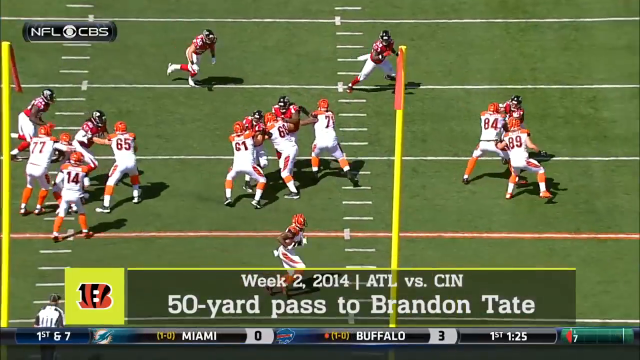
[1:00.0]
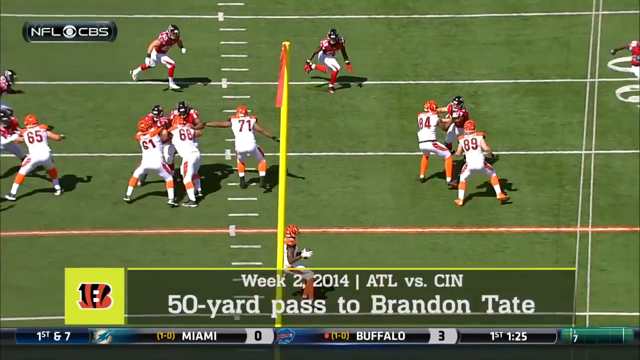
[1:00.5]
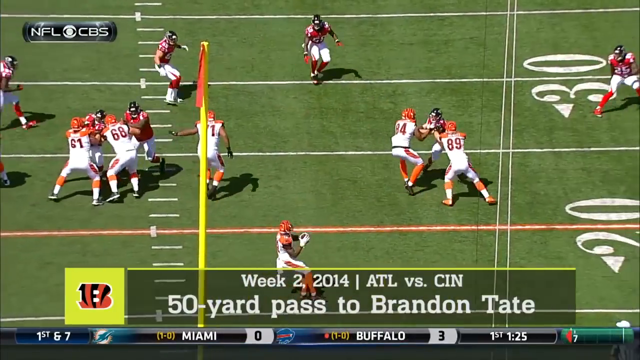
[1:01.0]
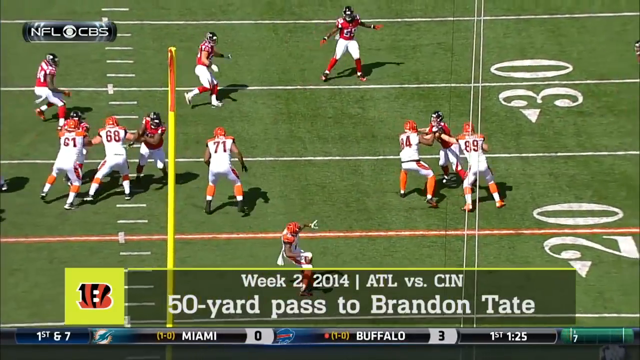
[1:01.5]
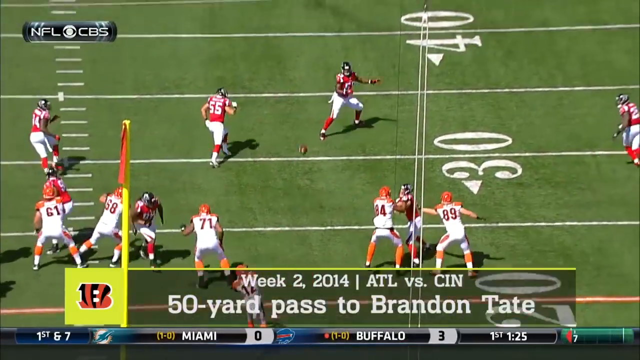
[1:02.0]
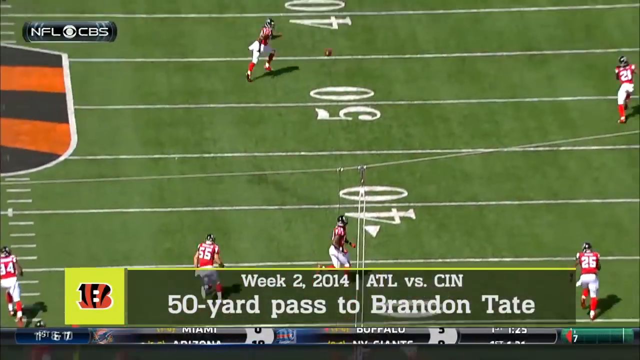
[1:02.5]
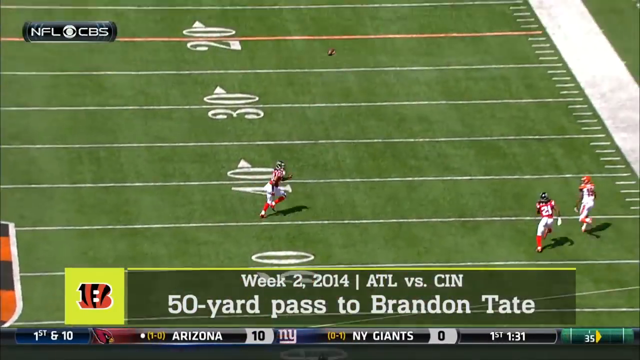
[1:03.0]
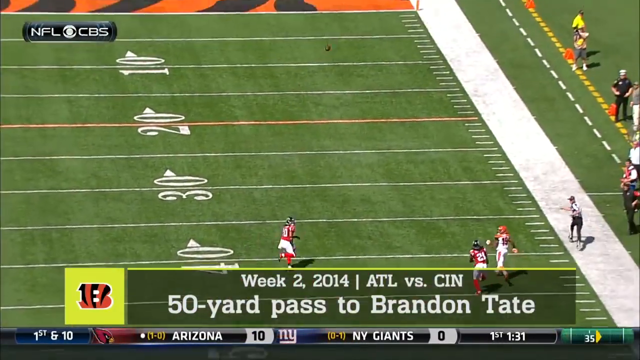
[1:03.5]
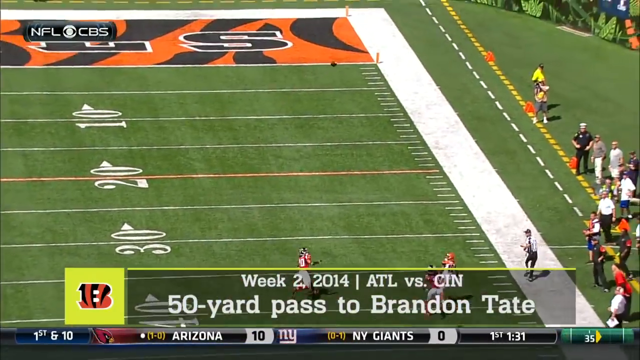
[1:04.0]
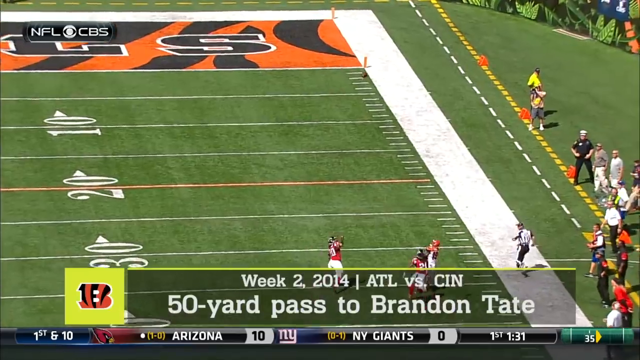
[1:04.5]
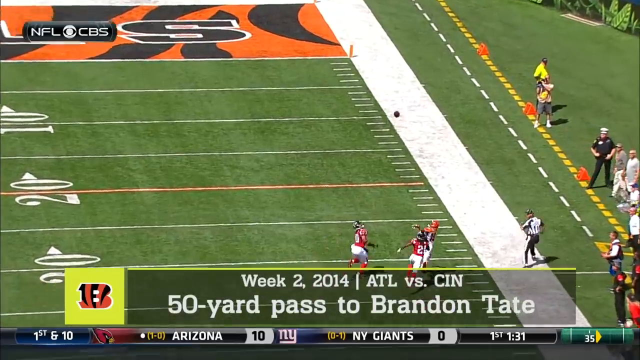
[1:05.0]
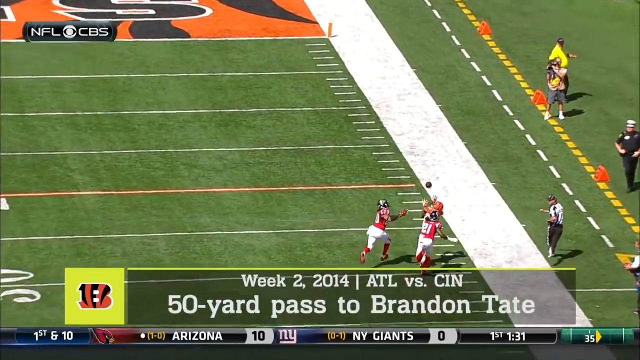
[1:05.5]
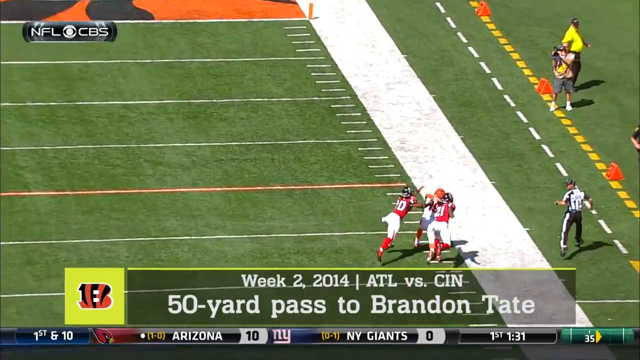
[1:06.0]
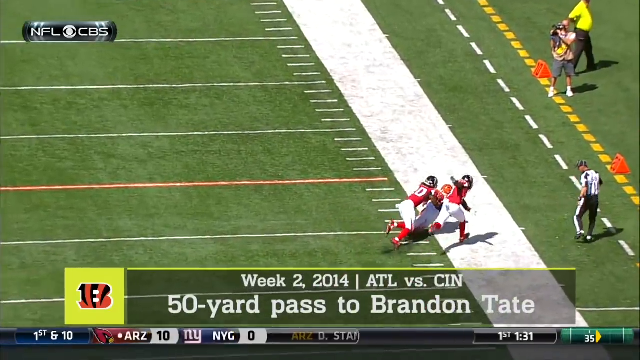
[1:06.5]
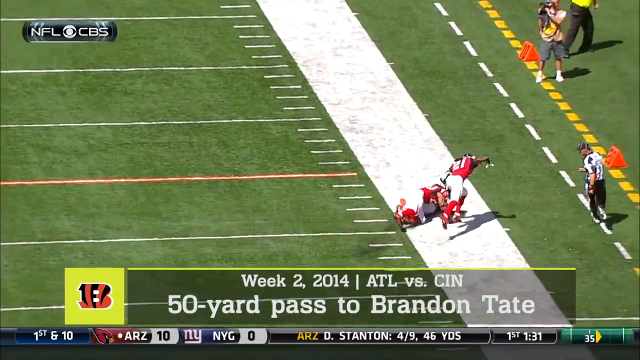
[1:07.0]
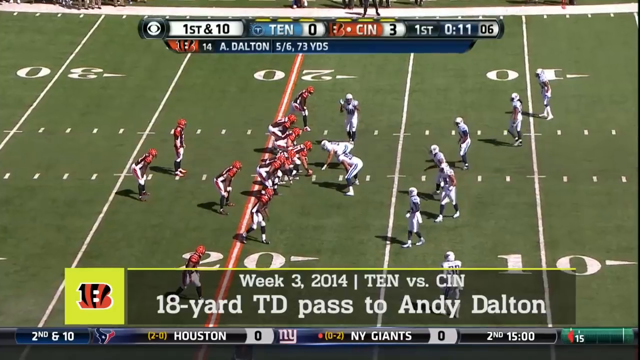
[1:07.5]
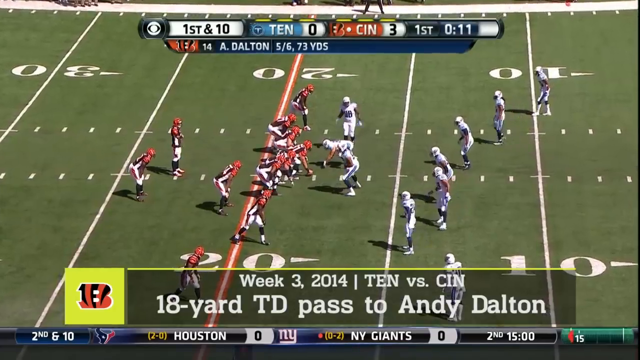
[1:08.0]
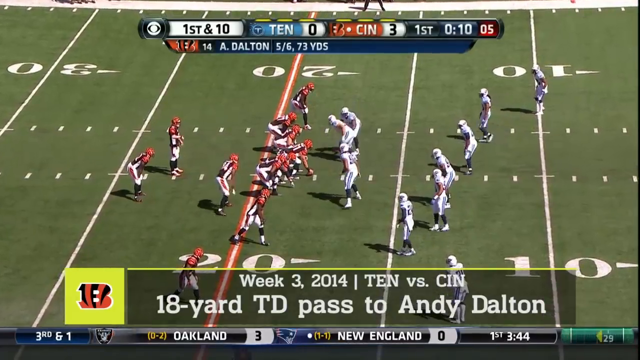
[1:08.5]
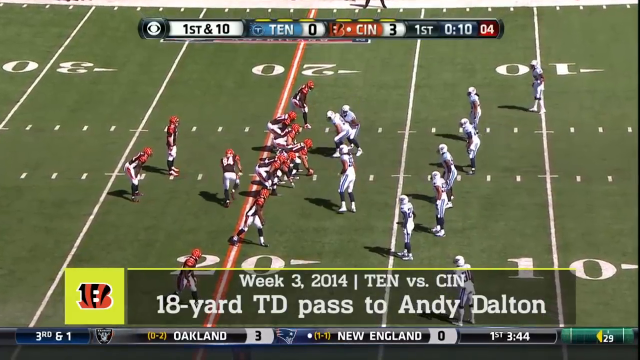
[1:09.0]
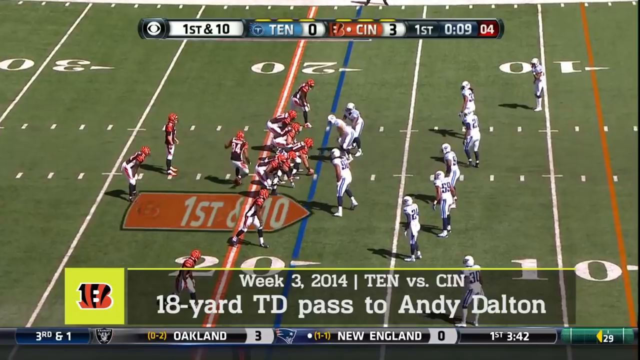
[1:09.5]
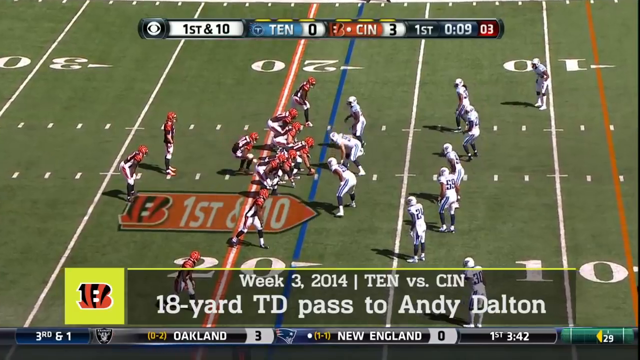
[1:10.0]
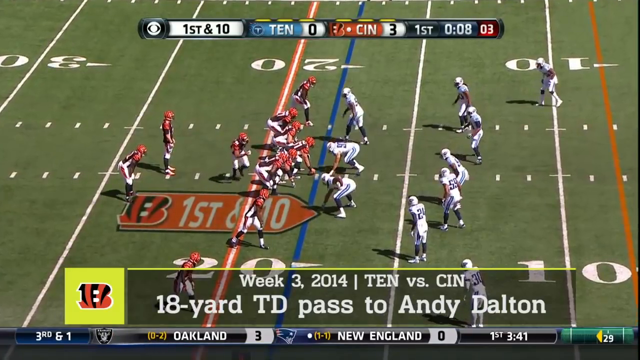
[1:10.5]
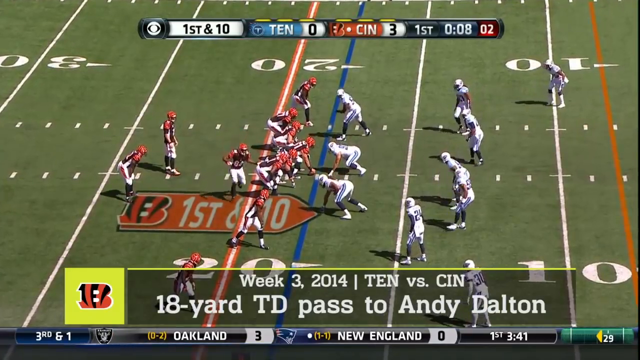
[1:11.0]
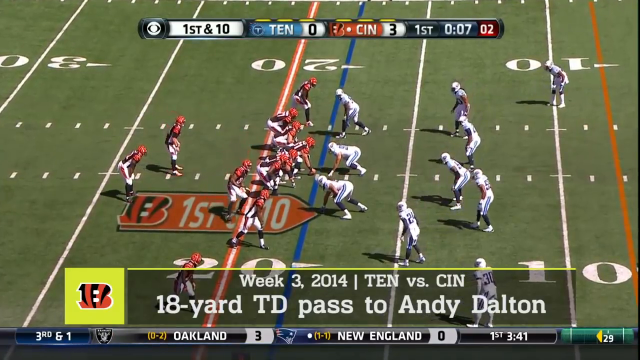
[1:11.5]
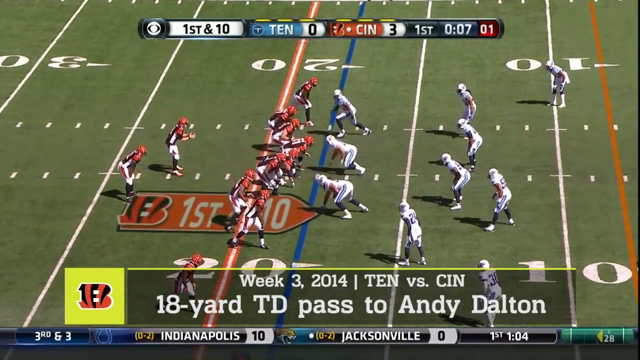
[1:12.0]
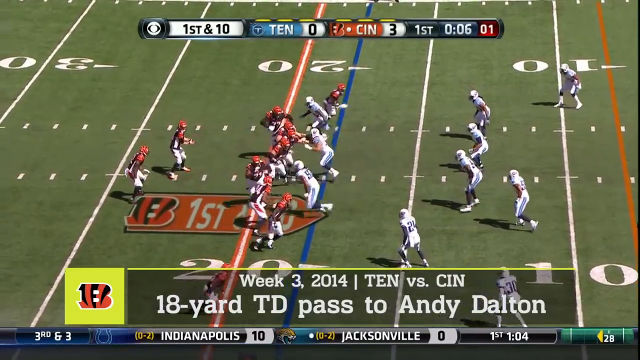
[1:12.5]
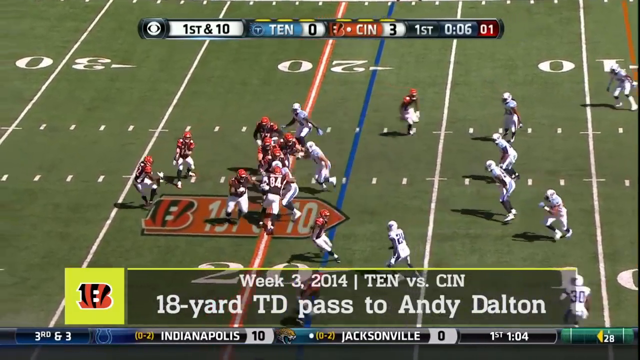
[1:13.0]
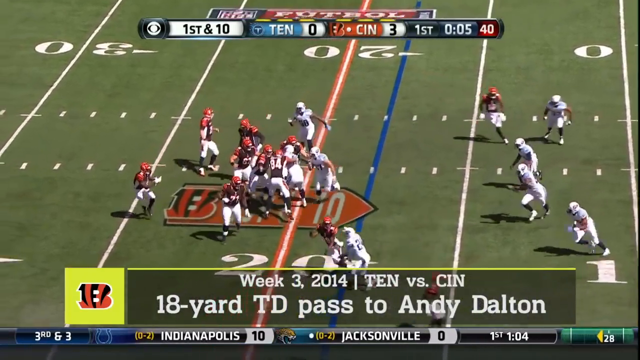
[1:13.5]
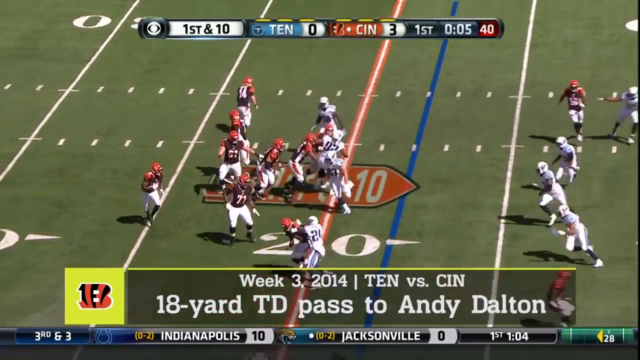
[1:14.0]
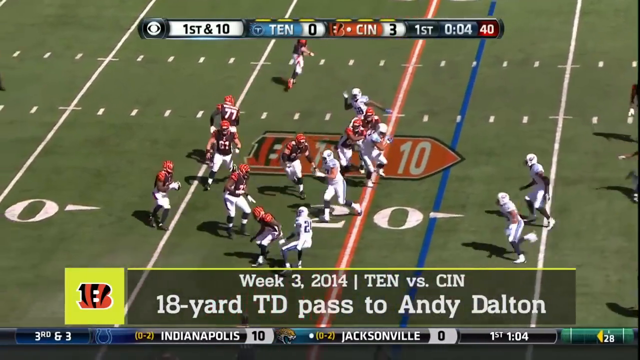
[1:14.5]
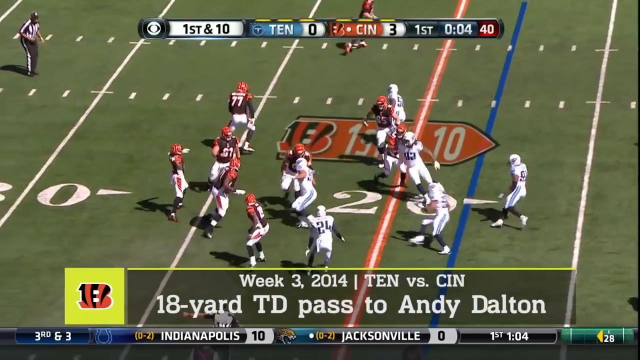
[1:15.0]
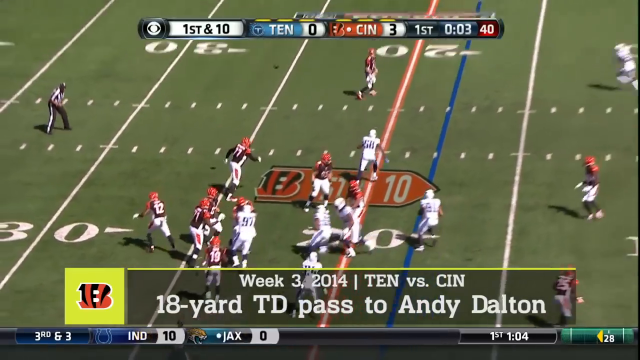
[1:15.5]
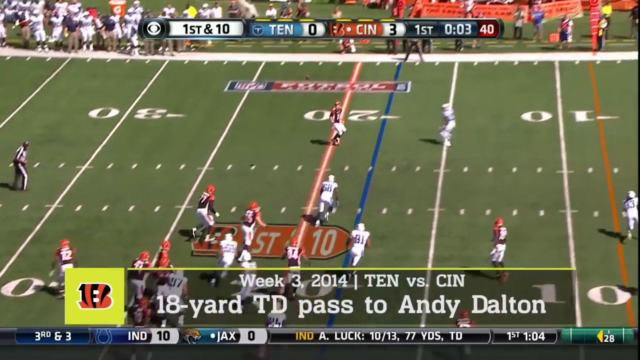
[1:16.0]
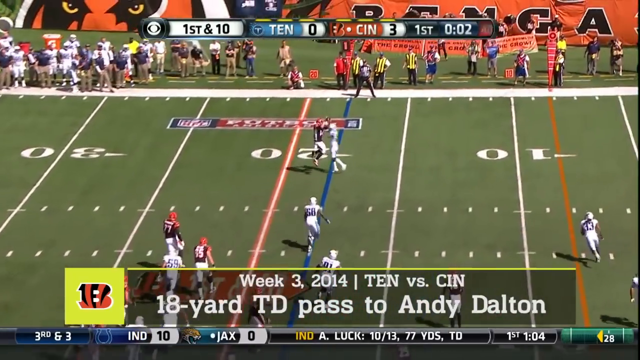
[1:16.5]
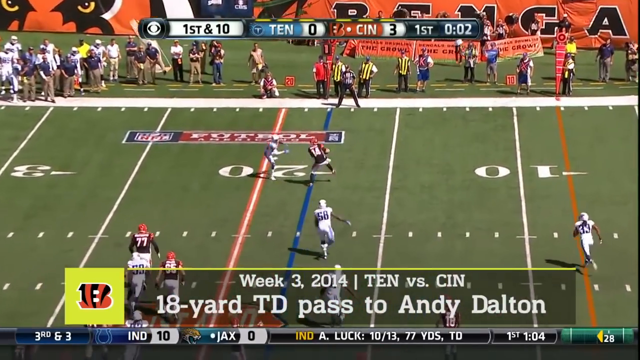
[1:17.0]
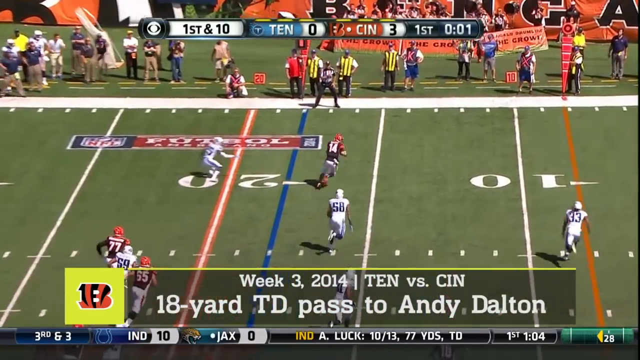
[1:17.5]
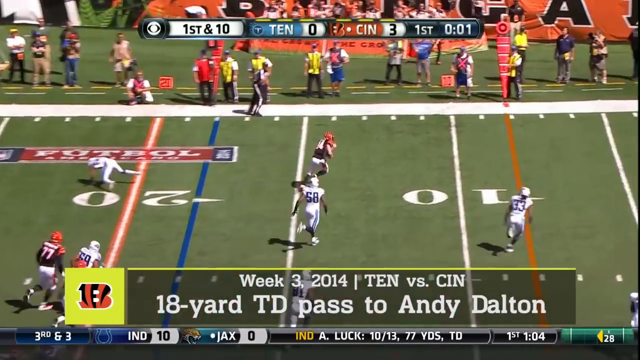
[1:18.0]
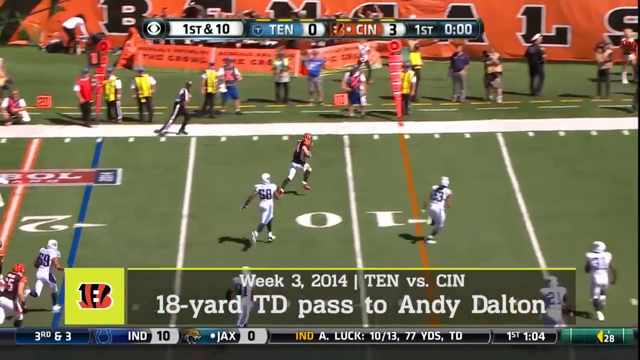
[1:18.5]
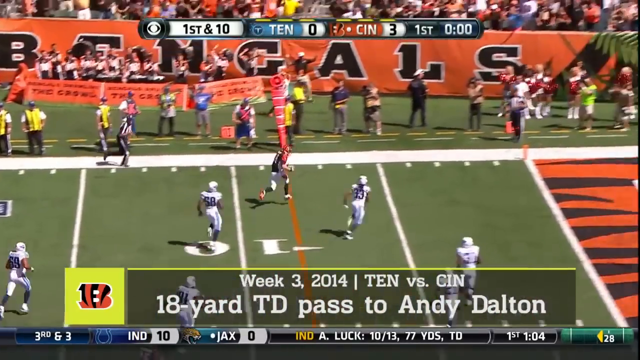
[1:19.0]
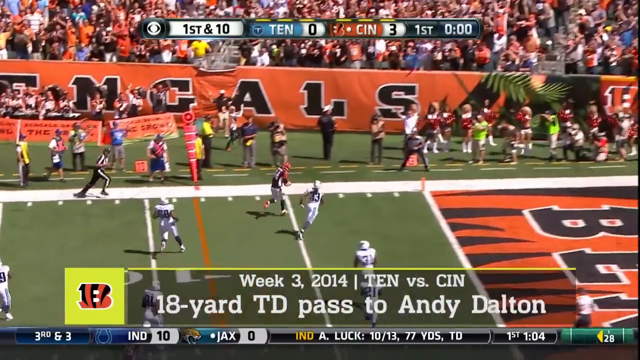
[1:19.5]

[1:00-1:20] Gameplay continues with a translucent banner at the bottom of the screen reading "Week 2, 2014, ATL vs CIN. A 50-yard pass to Brandon Tate". The ball is passed to a player in a white uniform and orange helmet, who catches it near the 20-yard line. Both teams then line up at the 20-yard line, and the quarterback passes the ball to a nearby teammate, who catches it close to being out of bounds. He has not actually fallen but seems to have jumped into the end zone to score a touchdown.